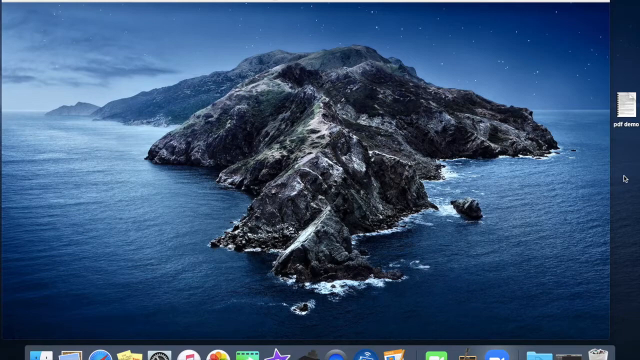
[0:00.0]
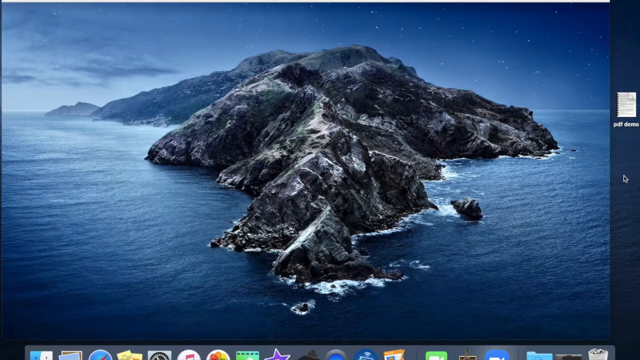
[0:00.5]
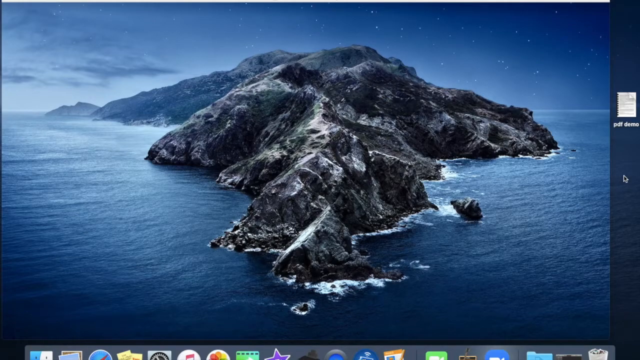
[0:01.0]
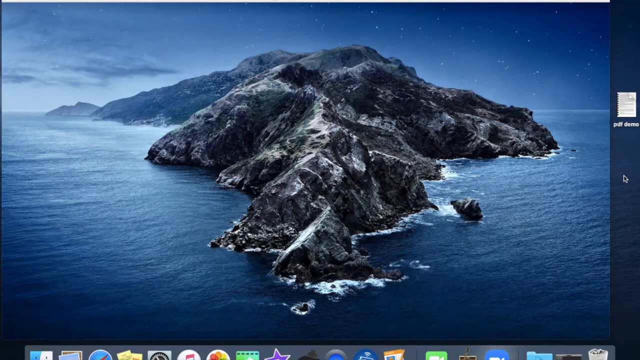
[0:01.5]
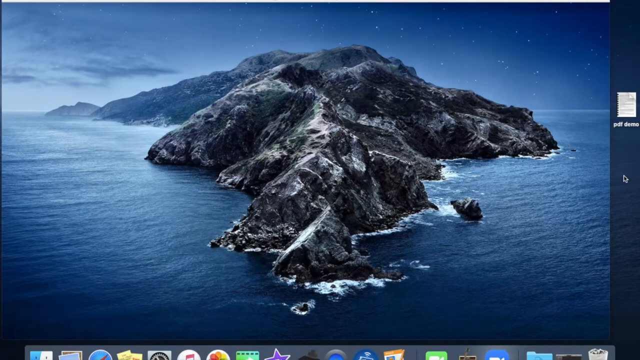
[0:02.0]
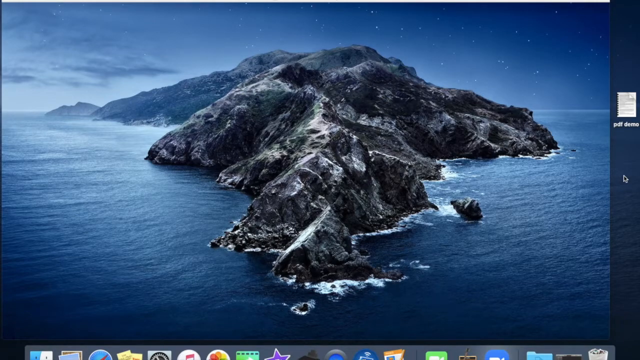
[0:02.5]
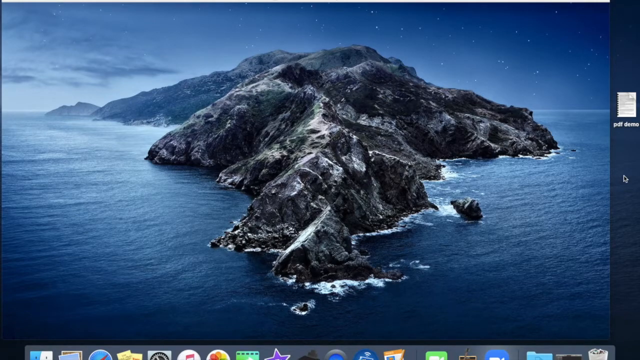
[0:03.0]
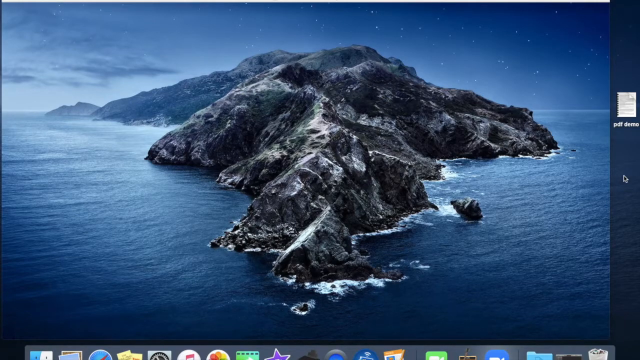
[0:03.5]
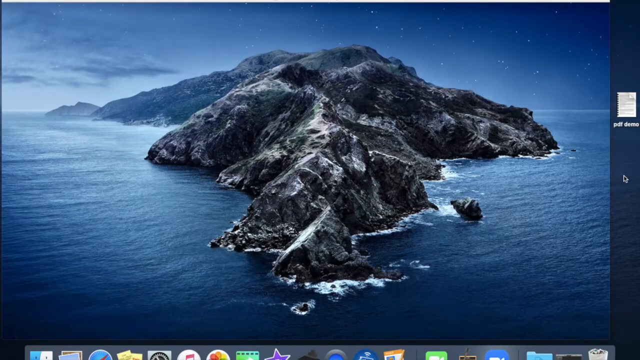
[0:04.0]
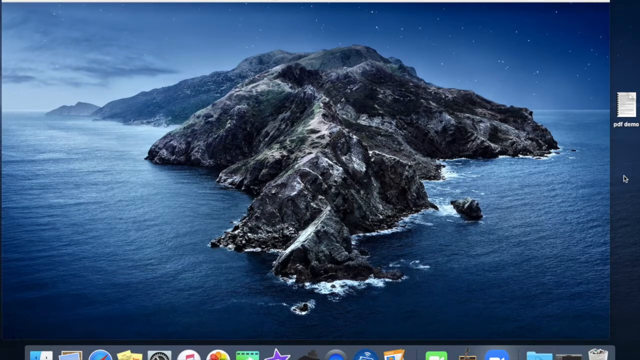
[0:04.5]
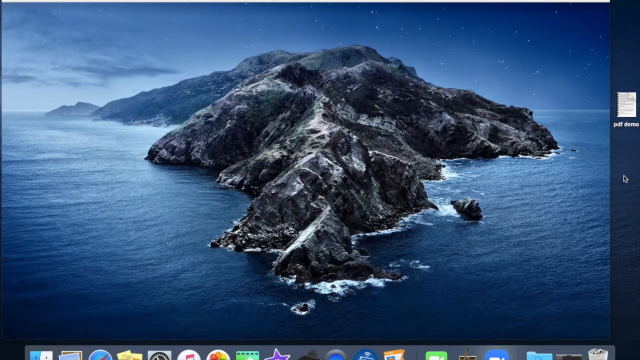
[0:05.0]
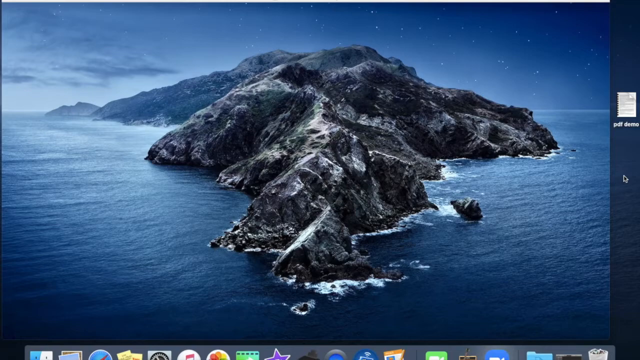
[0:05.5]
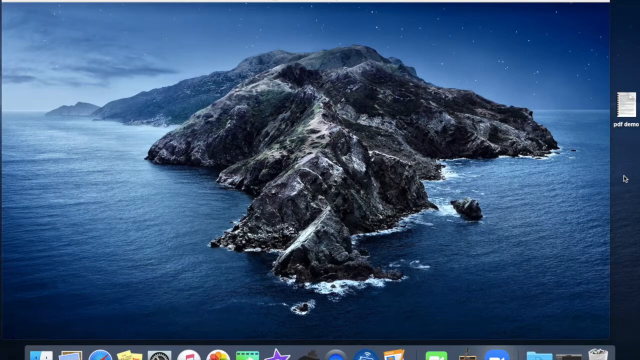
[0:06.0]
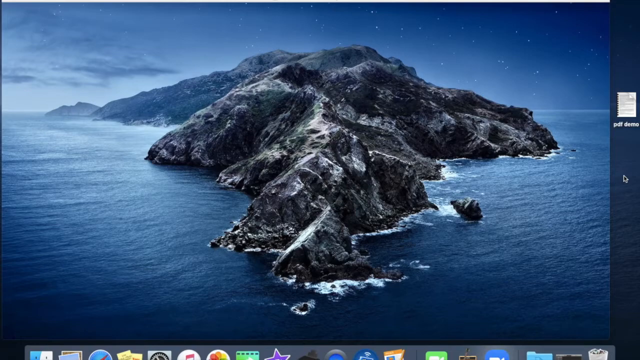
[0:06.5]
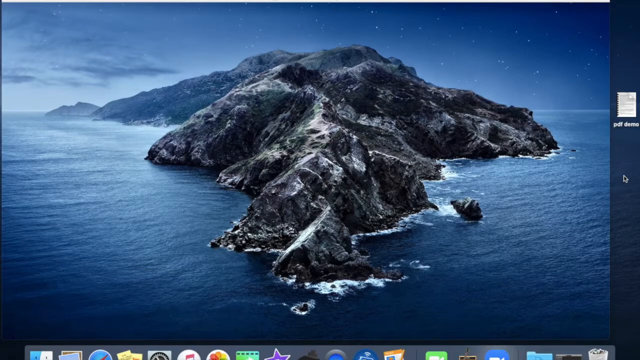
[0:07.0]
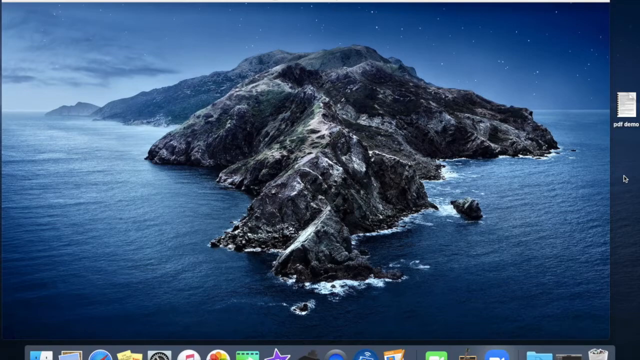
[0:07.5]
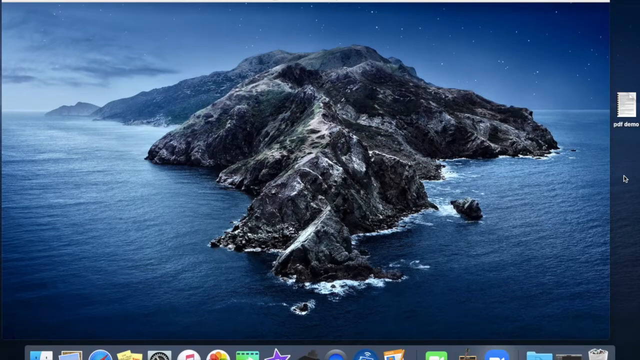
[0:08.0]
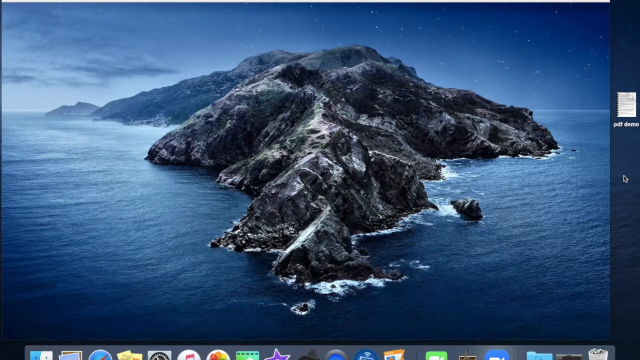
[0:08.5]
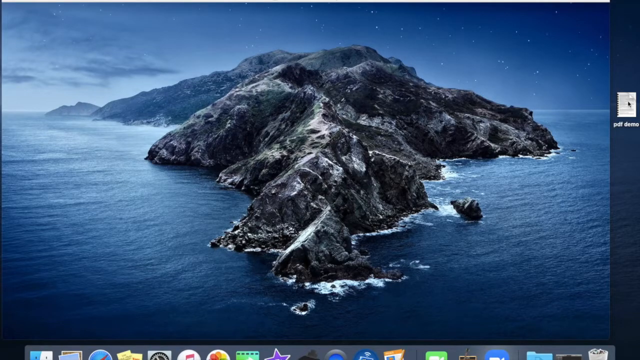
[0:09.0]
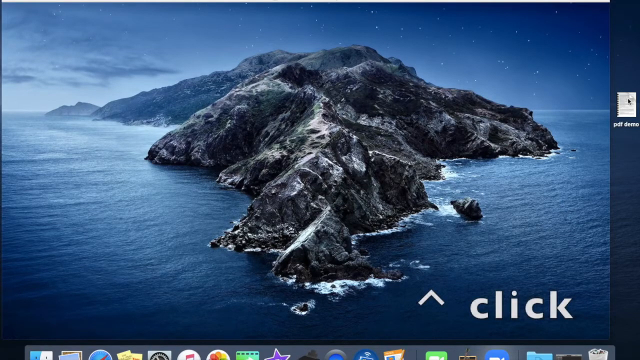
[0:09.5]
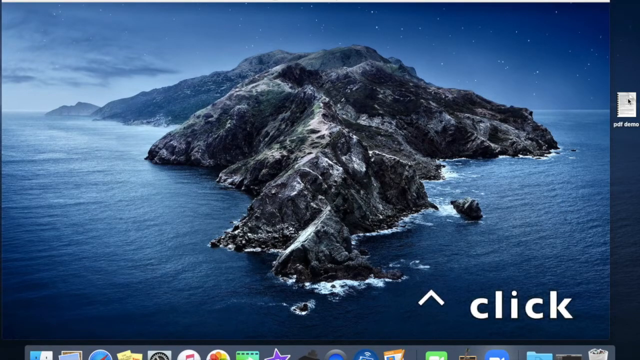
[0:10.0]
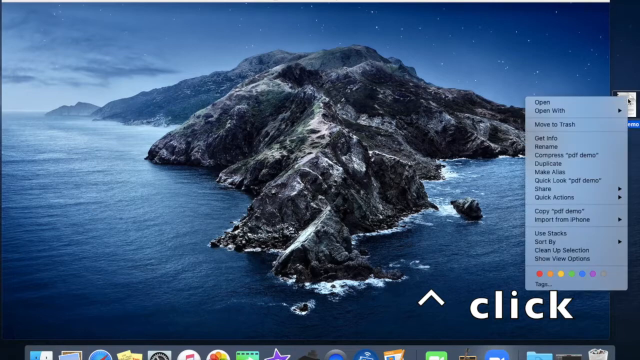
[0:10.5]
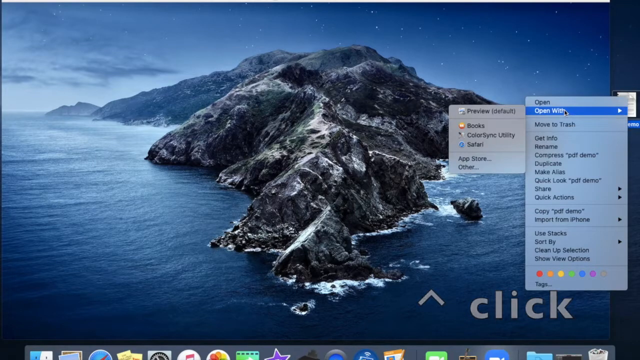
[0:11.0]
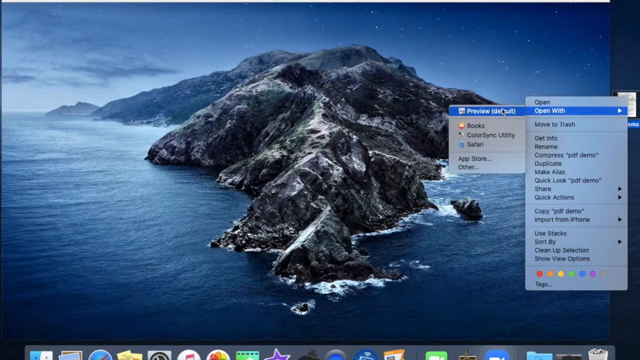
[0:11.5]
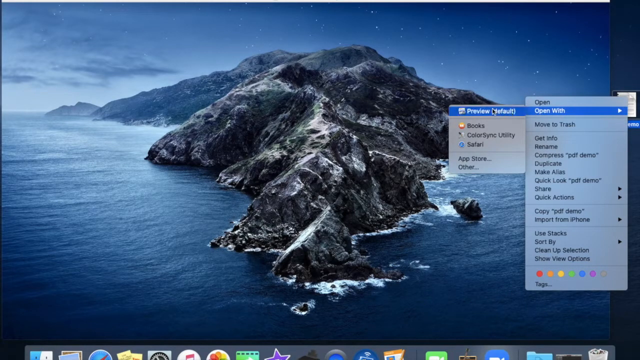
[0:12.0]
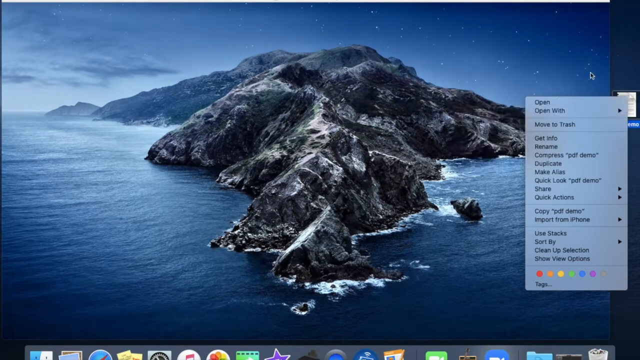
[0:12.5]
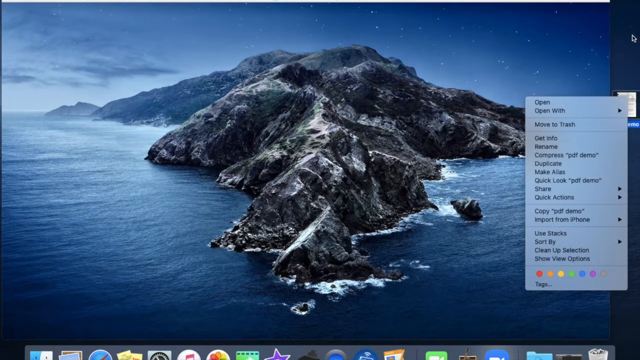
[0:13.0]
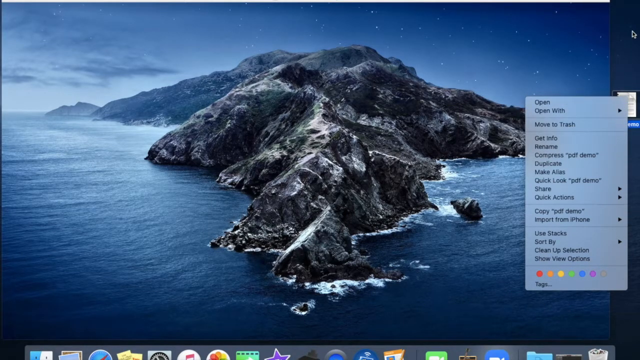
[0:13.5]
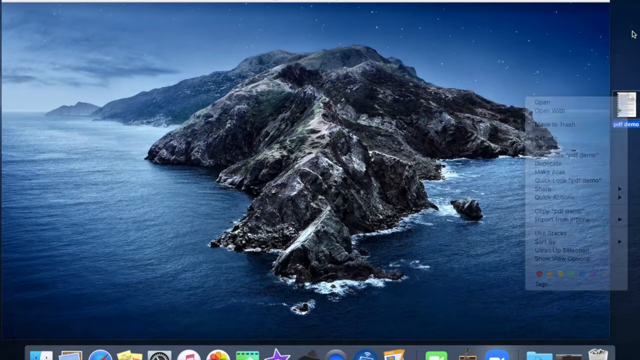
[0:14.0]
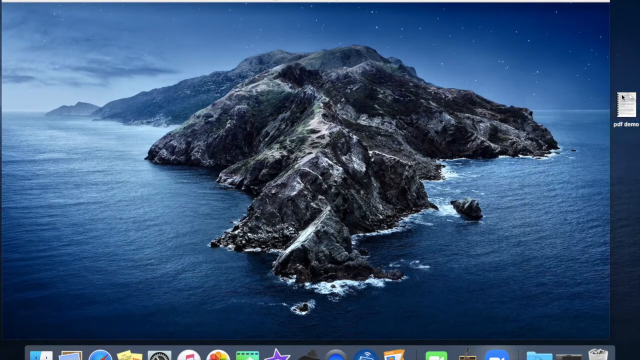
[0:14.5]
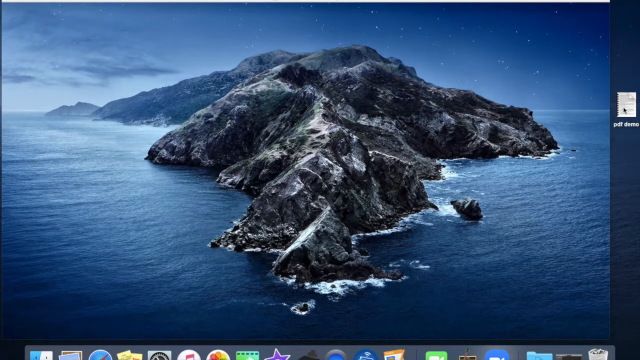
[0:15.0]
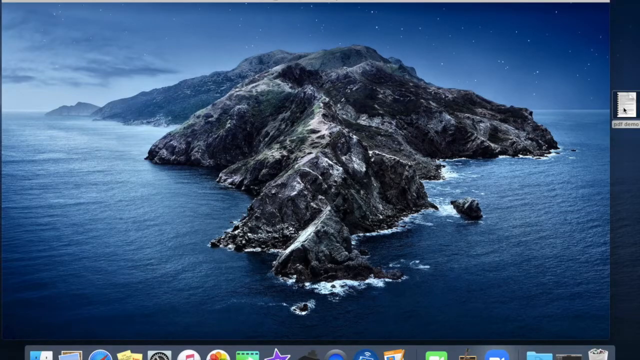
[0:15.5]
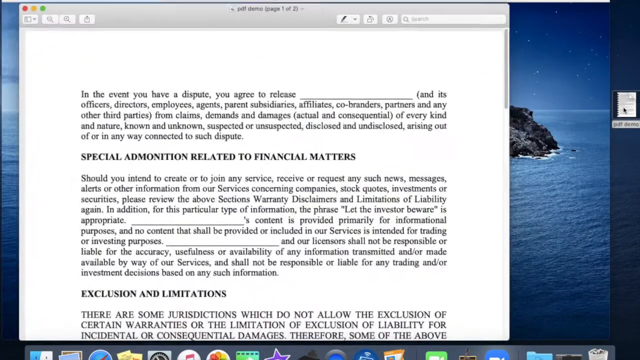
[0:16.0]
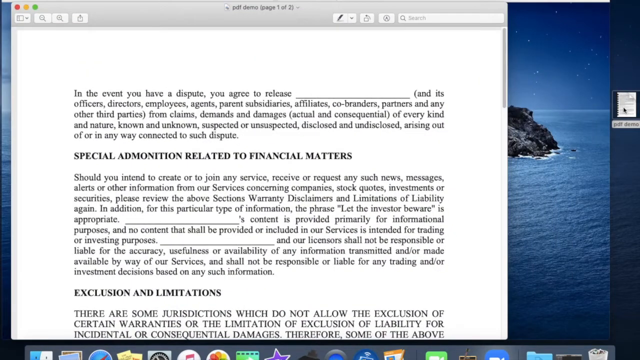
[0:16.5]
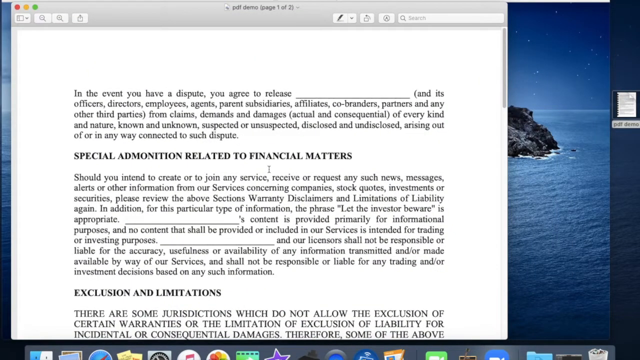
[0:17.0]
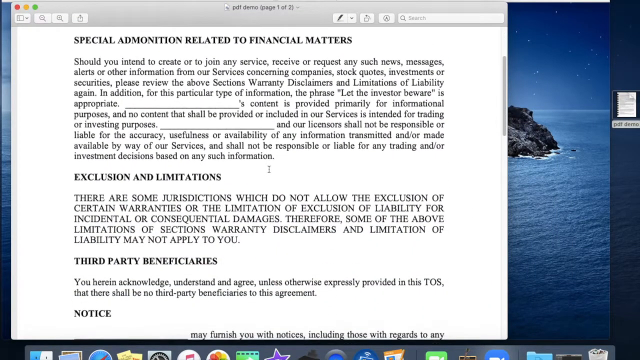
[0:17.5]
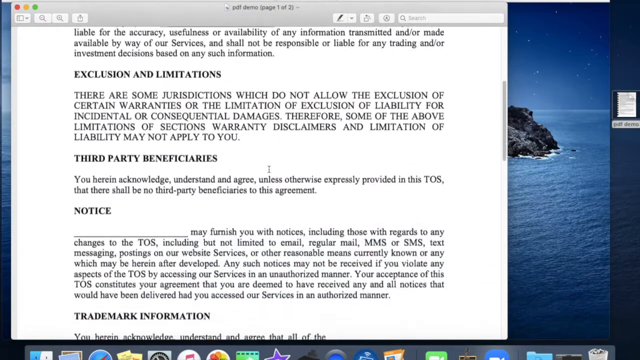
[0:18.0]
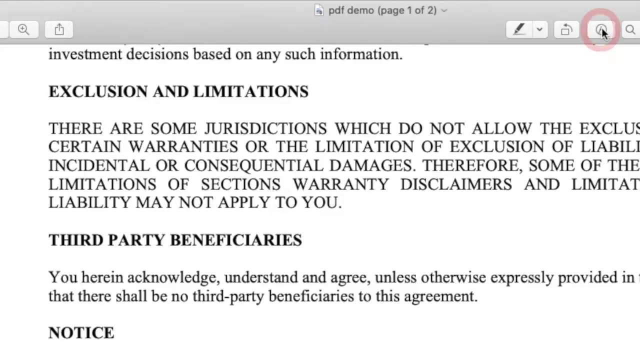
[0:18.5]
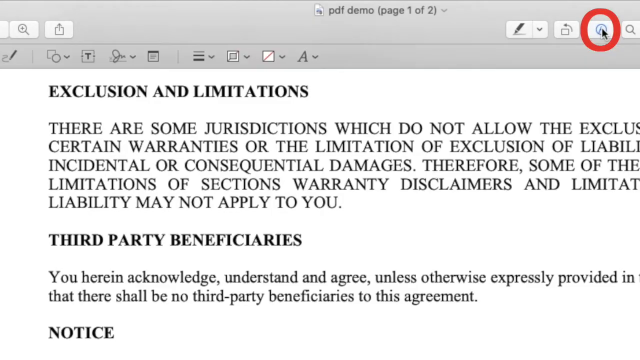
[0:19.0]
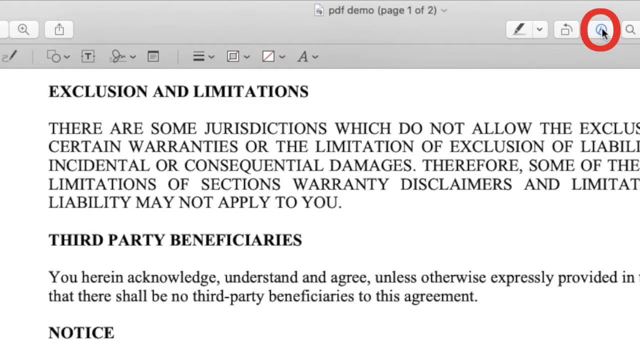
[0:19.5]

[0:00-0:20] A rocky, rugged island is in the middle of the ocean, with no trees or other vegetation visible and white water from waves around its edges. Someone clicks on the side of the screen with a cursor, and text boxes open with the words "open" and "open with". "Open with" is highlighted in a blue rectangle, and the words "preview books" appear. The preview button is clicked, then a small thumbnail on the right-hand side of the screen is clicked, and a larger page of writing comes up, covering the picture of the island. It is a white sheet of paper with lots of black writing, seemingly a PDF, including words about exclusion and limitations, third party beneficiaries and trademark information. At the top of the page are the words "pdf demo" and "demo page one of two", and a cursor moves around the top of the page, looking at different icons.